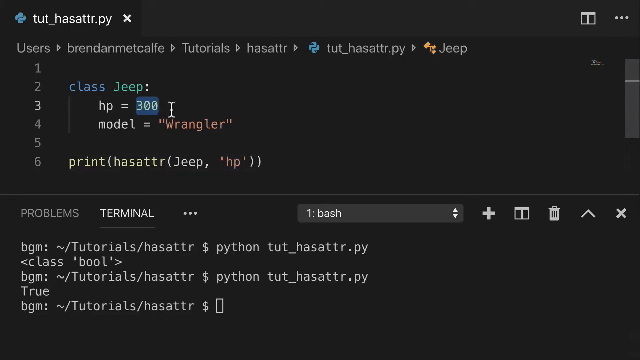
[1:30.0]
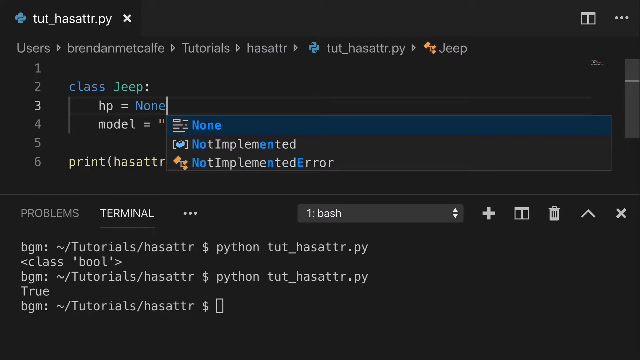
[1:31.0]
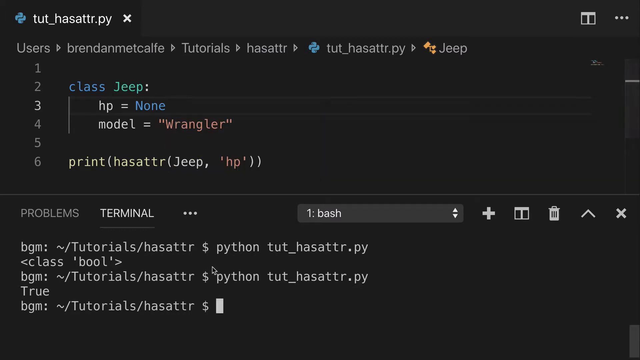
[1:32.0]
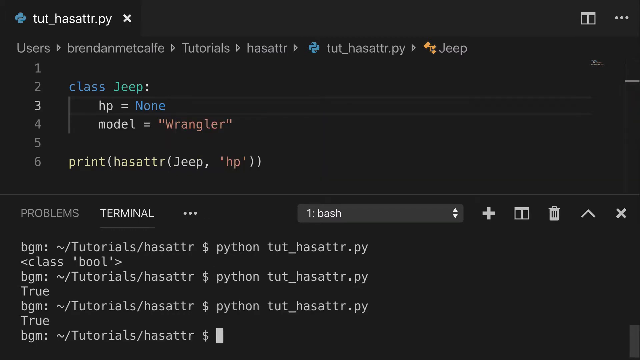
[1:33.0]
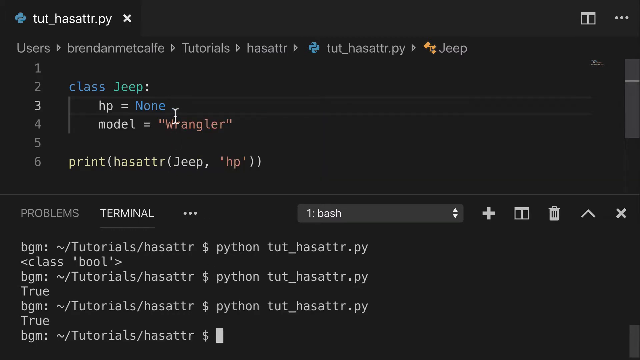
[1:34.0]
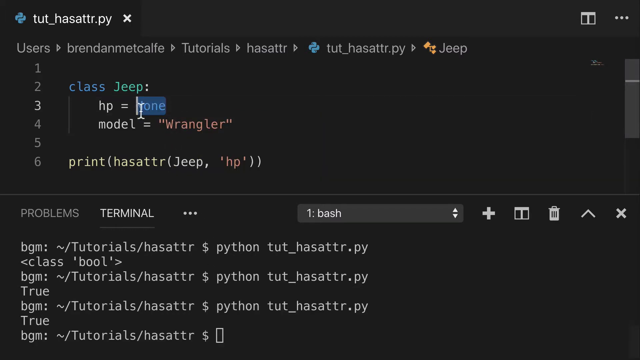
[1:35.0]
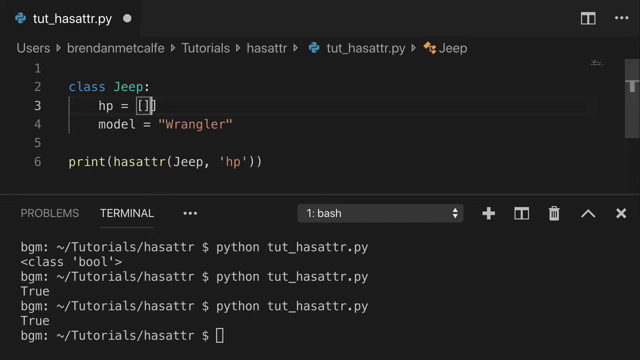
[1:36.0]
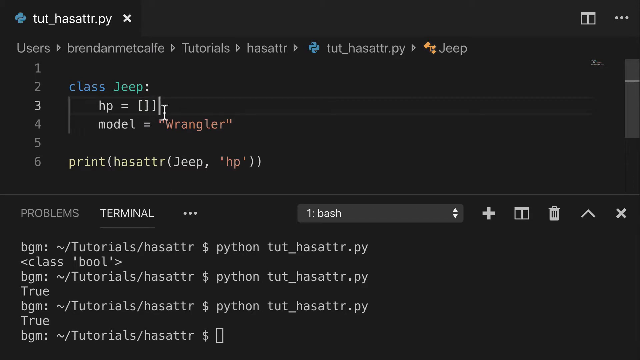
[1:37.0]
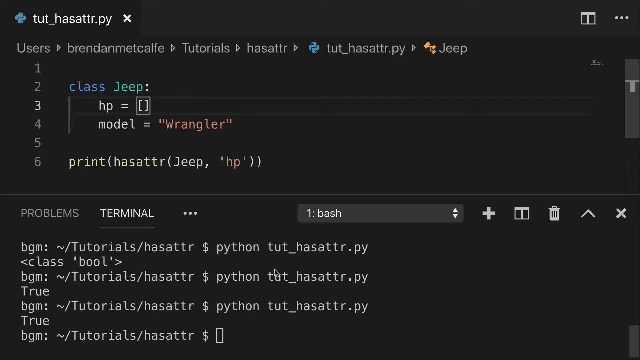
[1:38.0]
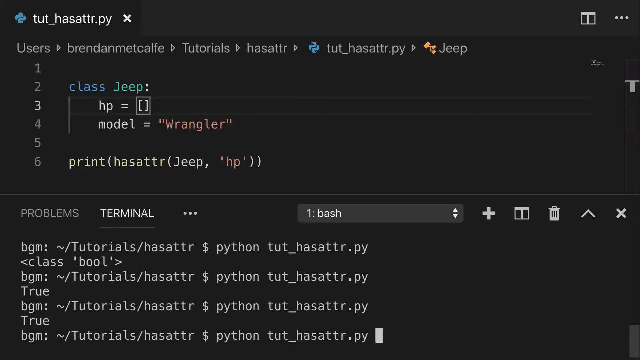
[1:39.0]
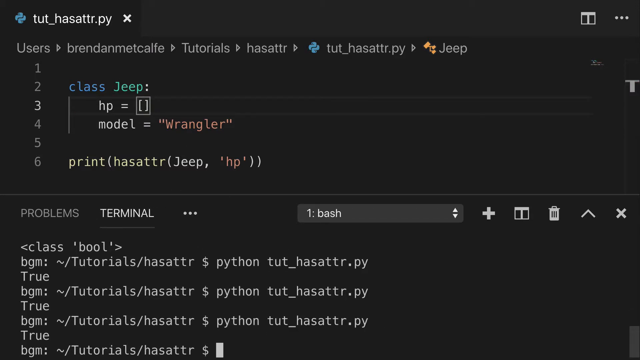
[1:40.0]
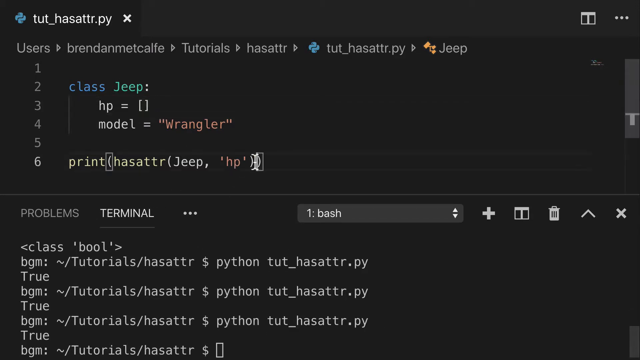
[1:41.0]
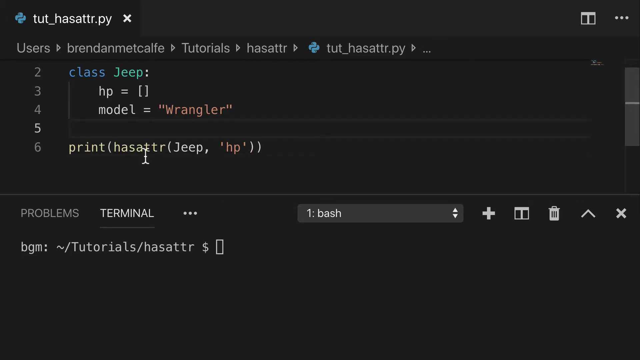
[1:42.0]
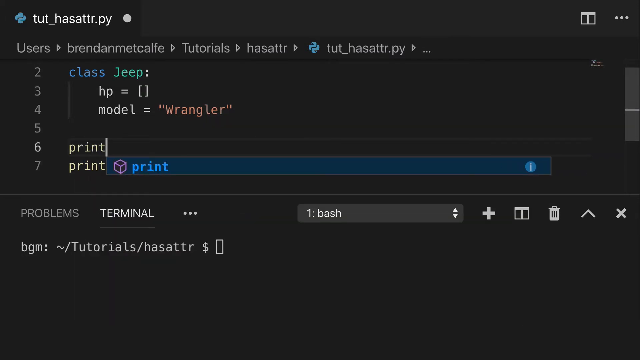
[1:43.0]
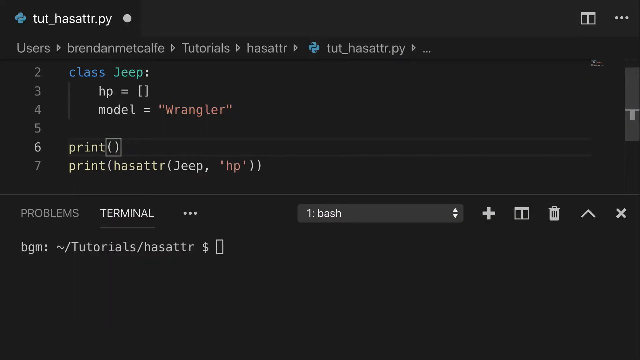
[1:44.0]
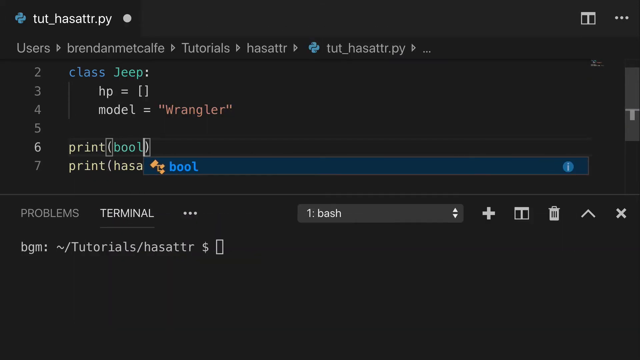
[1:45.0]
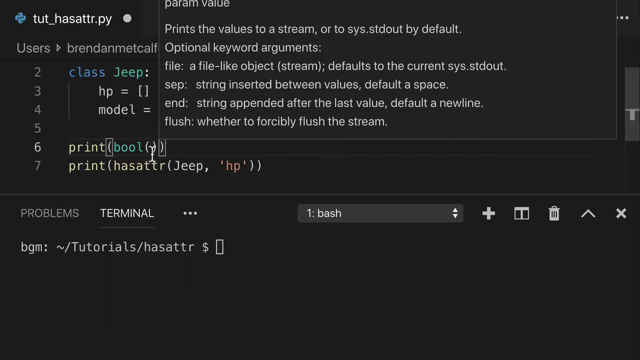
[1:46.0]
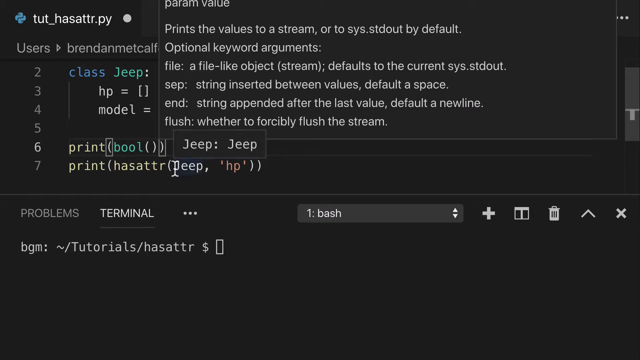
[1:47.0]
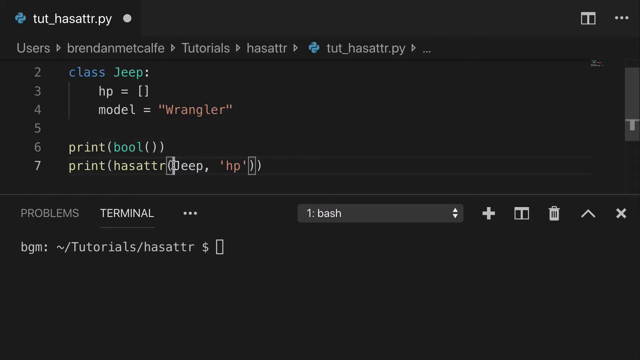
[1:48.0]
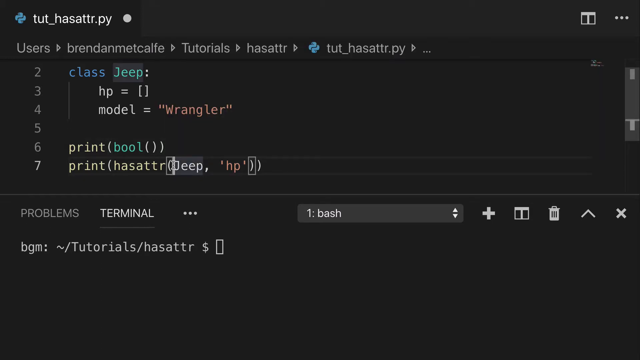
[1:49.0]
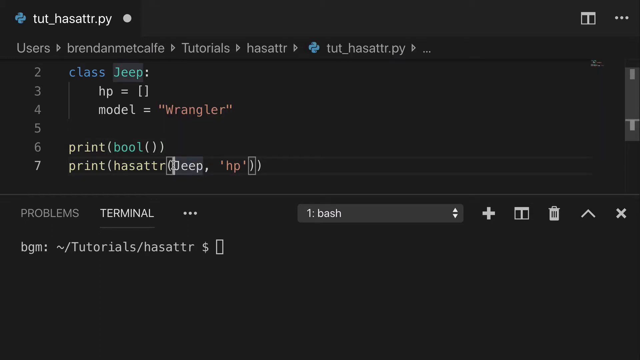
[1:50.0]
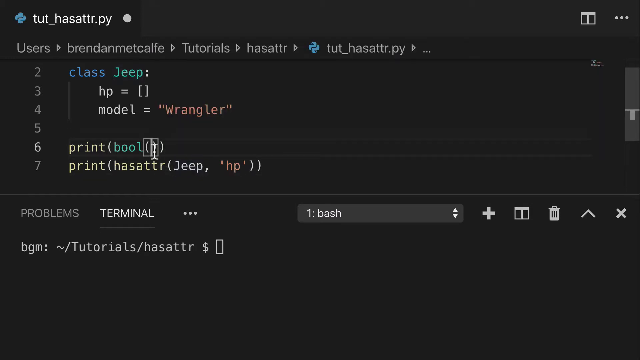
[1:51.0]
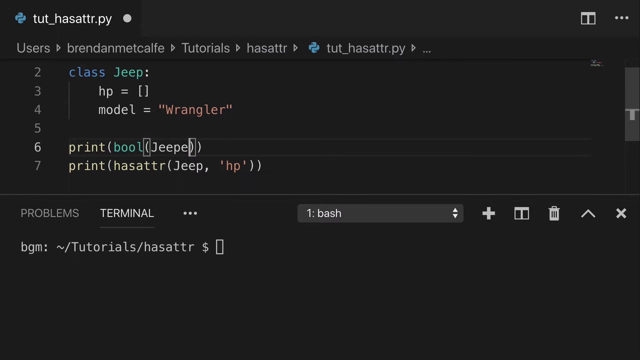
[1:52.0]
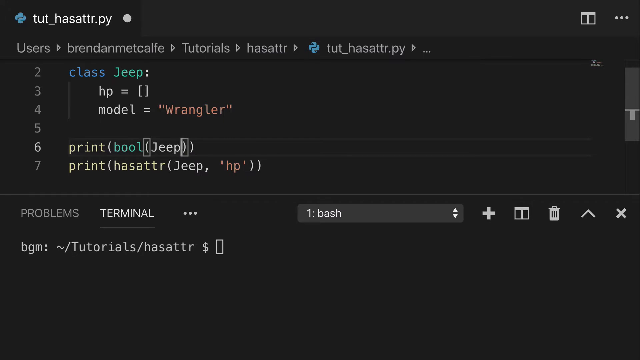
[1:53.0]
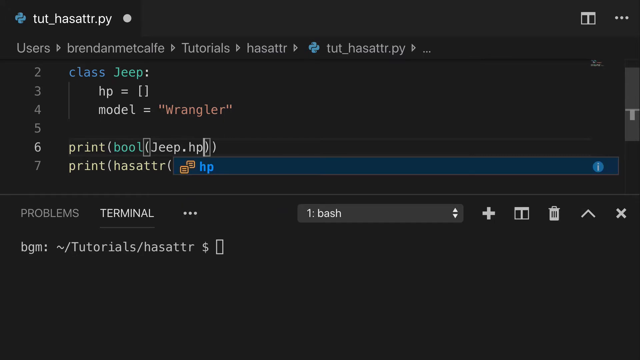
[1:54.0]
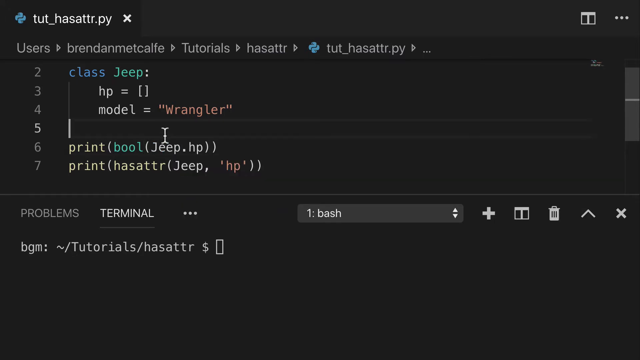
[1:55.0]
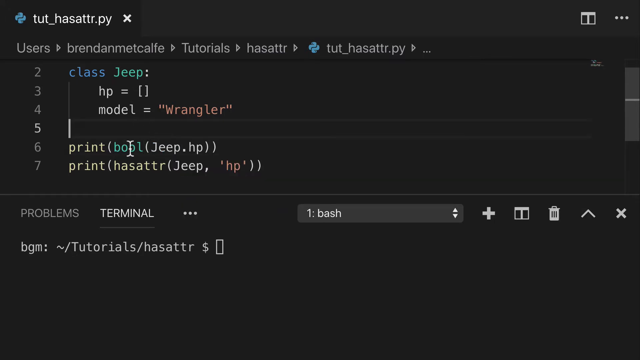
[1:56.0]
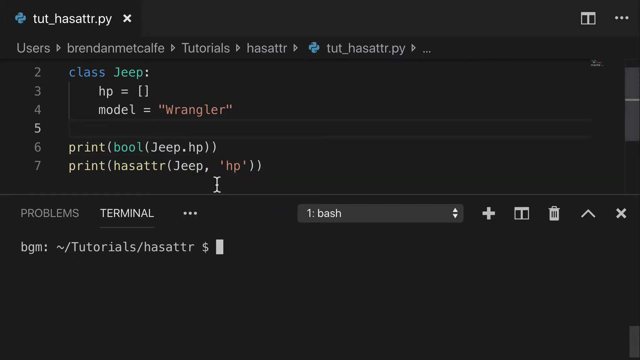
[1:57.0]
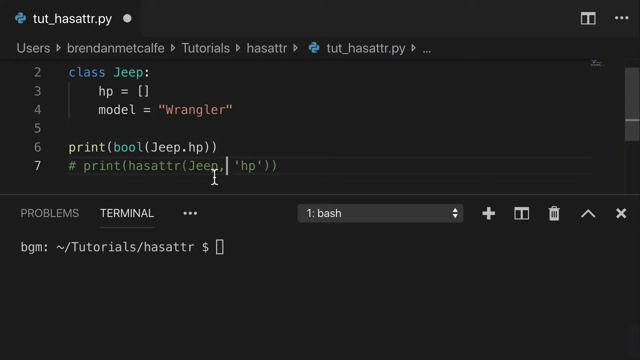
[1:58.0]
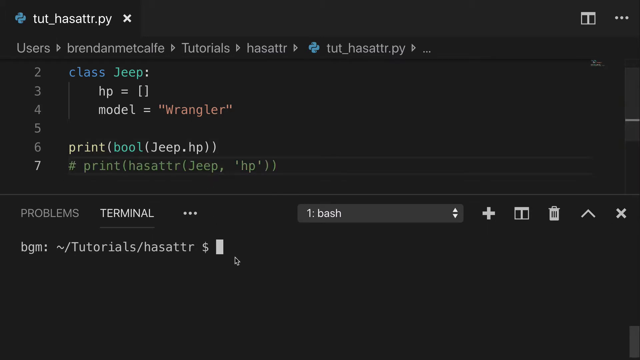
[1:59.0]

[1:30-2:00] A Python code editor screen with a dark background shows the file tut_hasattr.py. The code has line numbers from one to six, with code written on the second, third, fourth and sixth lines. On the third line, "hp=300" is written, and "300" is selected. A terminal is open below the code, where the code has already been run twice, with the output "true" the second time. The 300 is deleted and replaced with "NONE", and a dialog box opens below while it is typed. The mouse moves to the terminal and the file name is typed to run the code; the output is "true". The mouse moves back to the third line, where none is selected and replaced with two square brackets. The code is run again and the output is "true". A new line of code is written on line 6, moving the previous sixth line down to line 7. The new sixth line is written as print bool, and while it is written a dialog box shows explanations of these functions. The mouse hovers over "jeep" on line 7, which opens a dialog box explaining jeep. The terminal is cleared and is empty with a blinking cursor. Then "jeep.hp" is written on the sixth line.